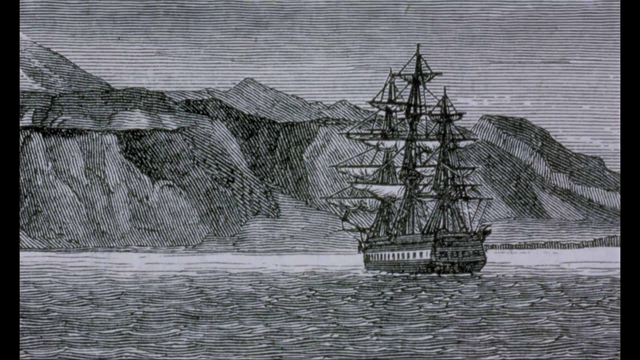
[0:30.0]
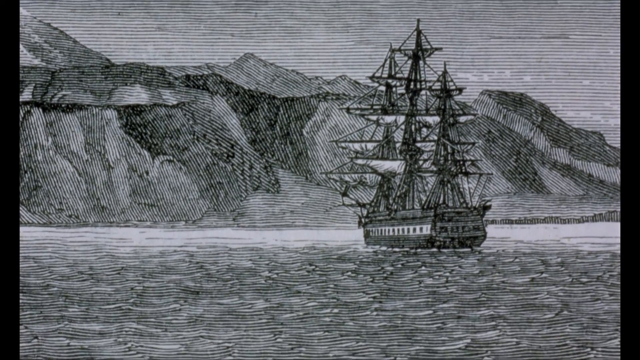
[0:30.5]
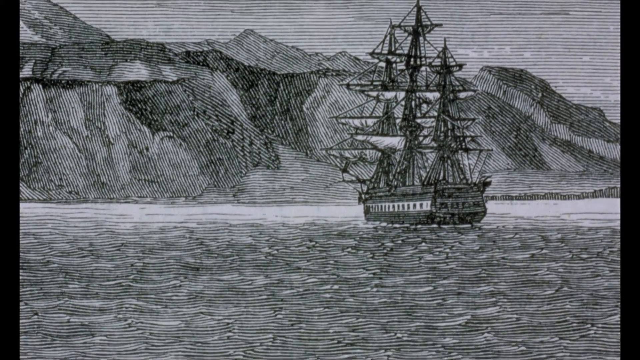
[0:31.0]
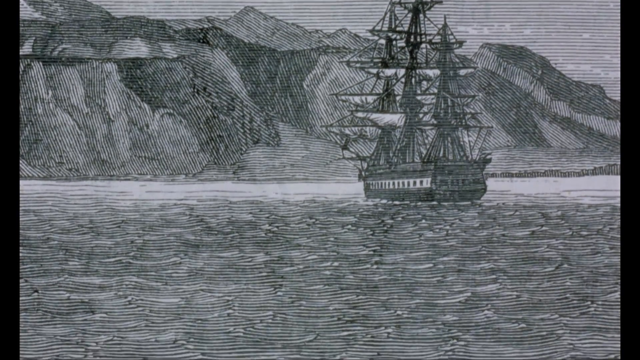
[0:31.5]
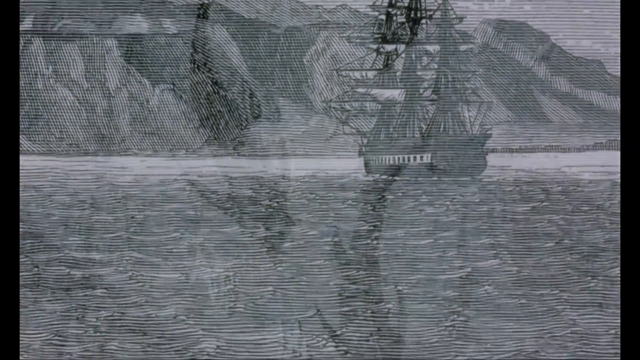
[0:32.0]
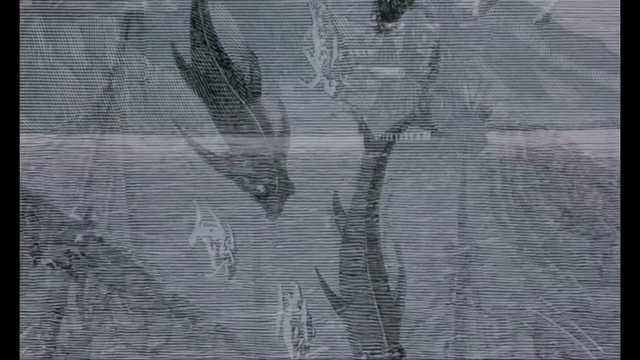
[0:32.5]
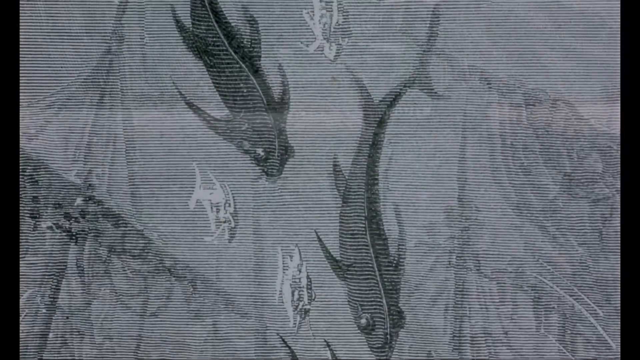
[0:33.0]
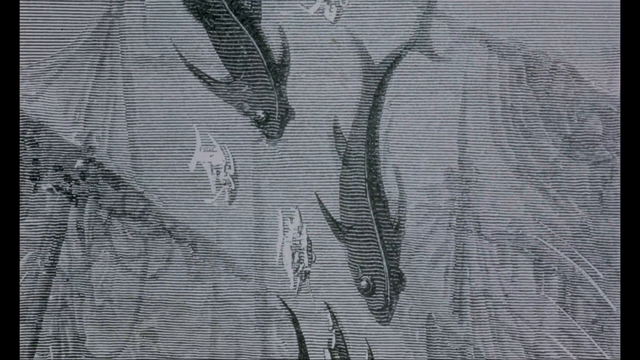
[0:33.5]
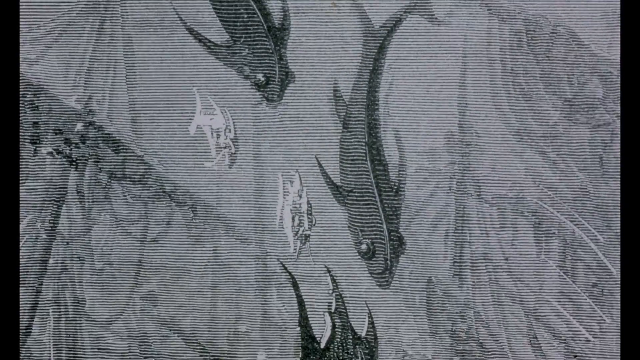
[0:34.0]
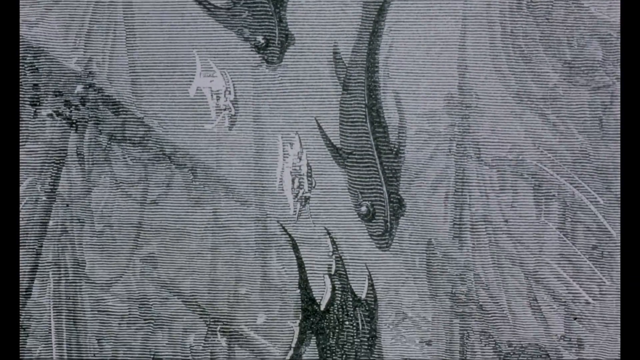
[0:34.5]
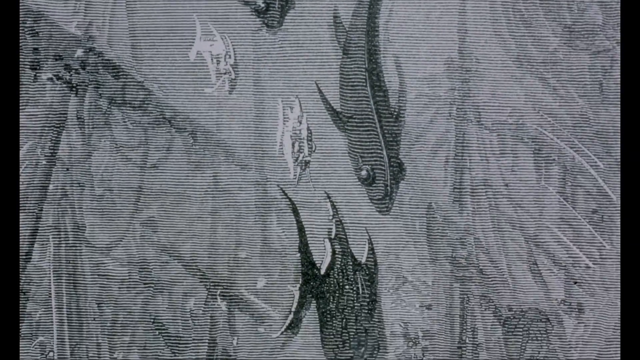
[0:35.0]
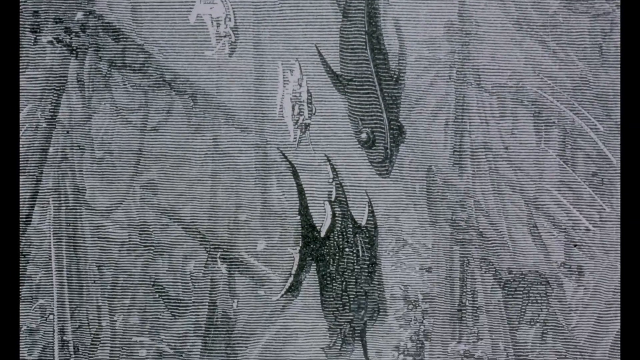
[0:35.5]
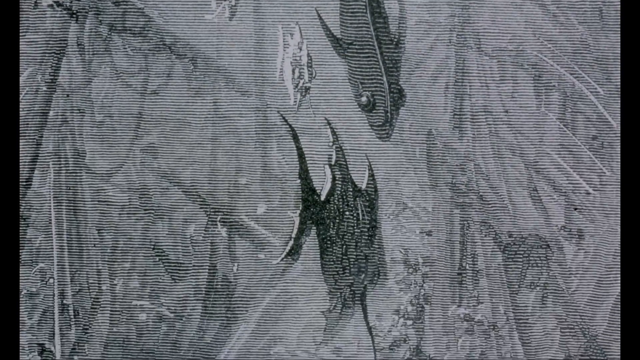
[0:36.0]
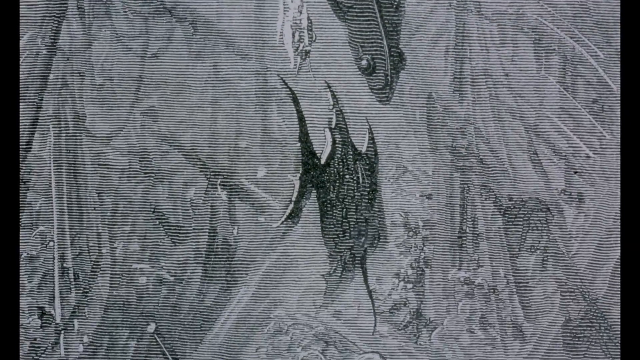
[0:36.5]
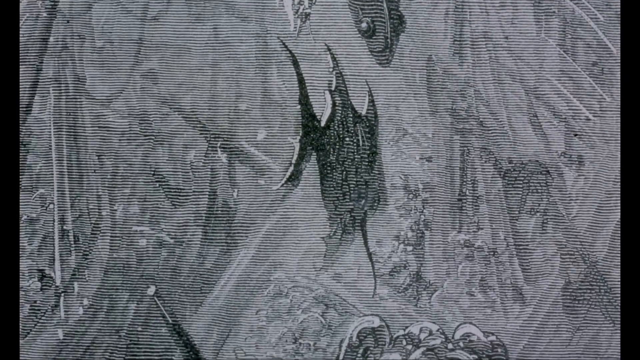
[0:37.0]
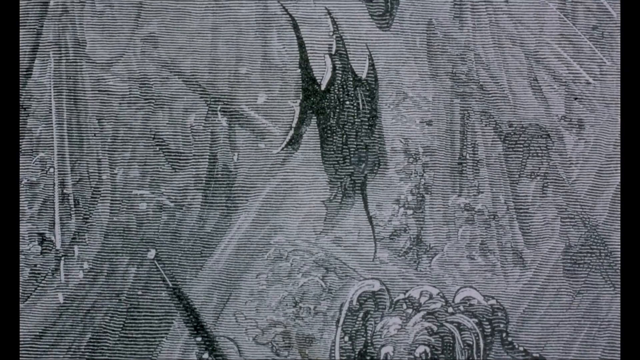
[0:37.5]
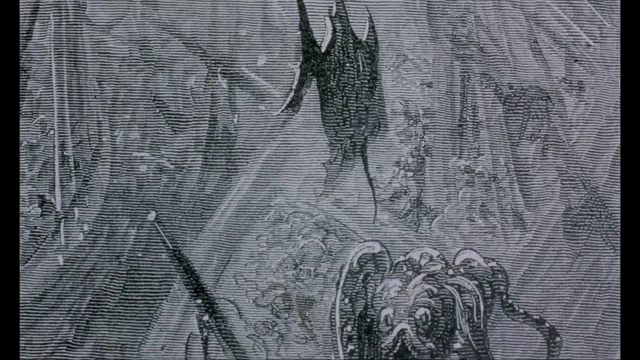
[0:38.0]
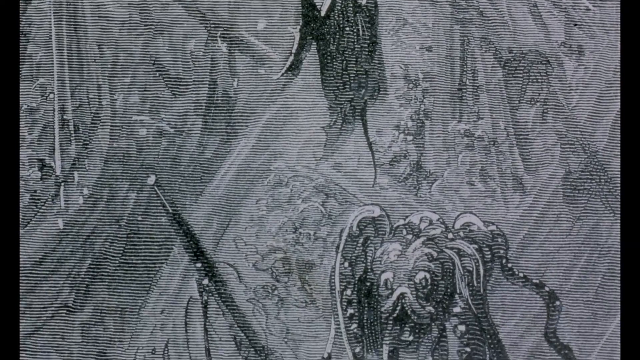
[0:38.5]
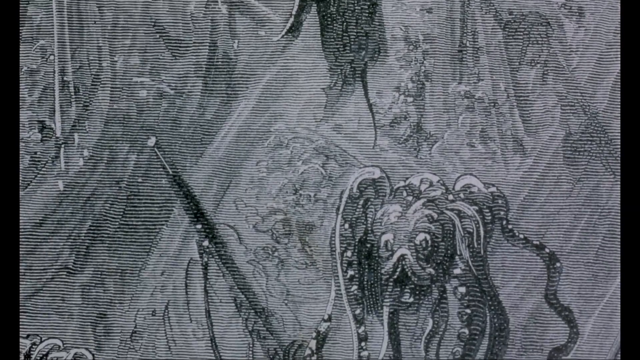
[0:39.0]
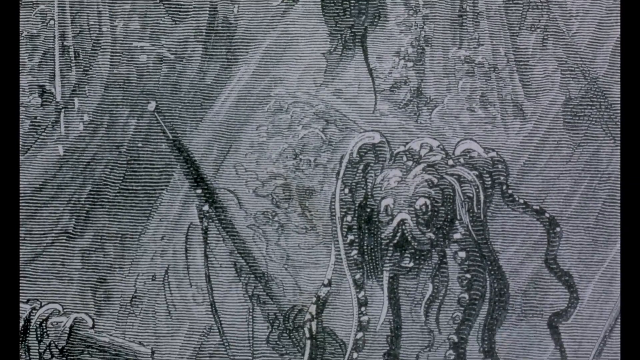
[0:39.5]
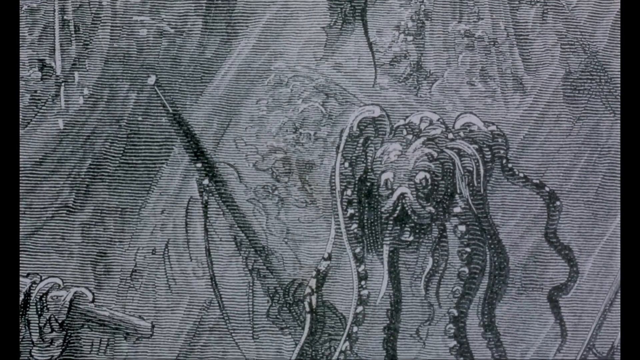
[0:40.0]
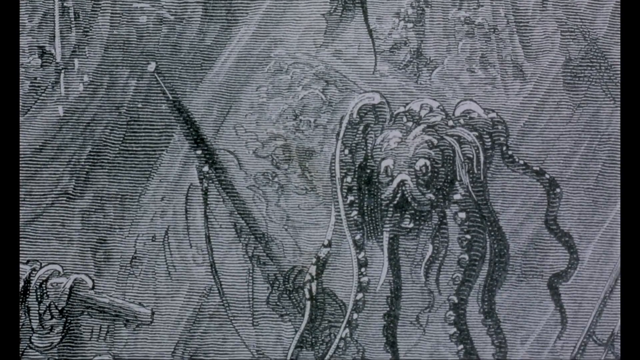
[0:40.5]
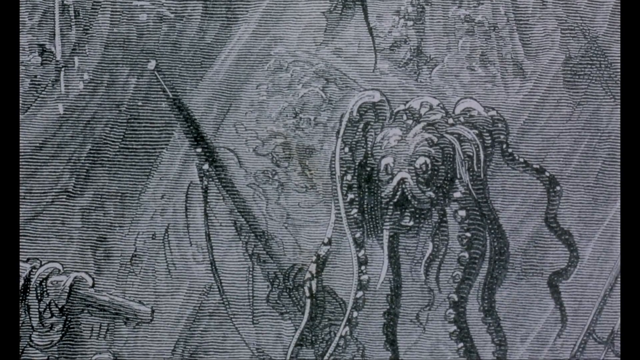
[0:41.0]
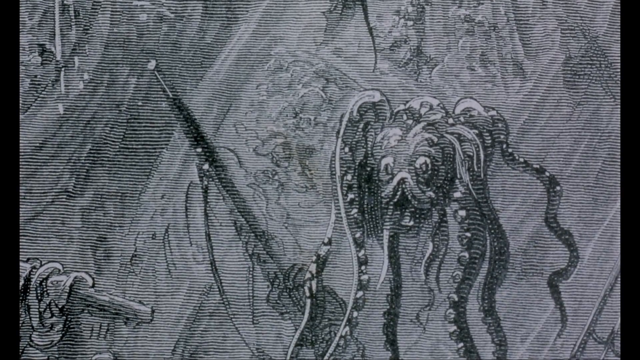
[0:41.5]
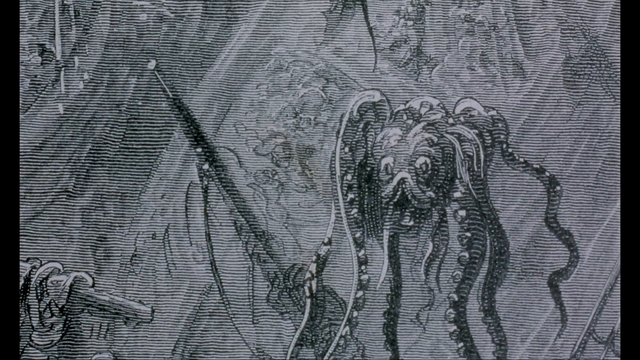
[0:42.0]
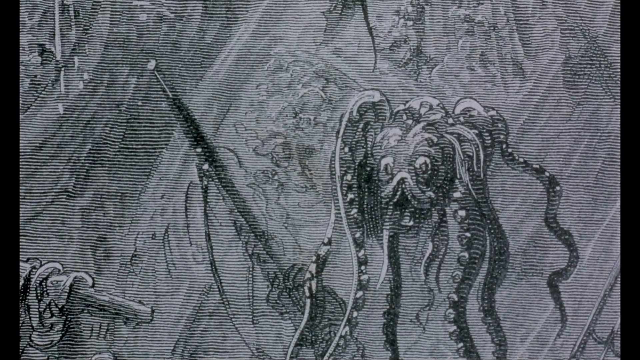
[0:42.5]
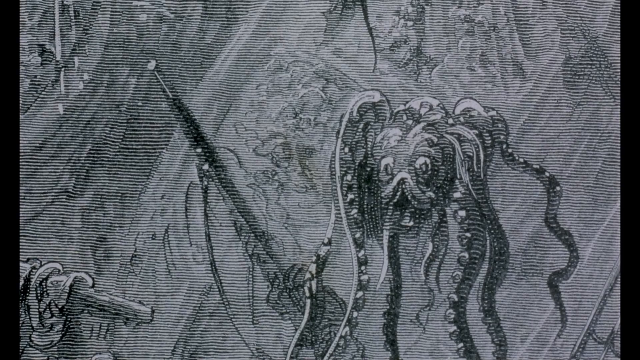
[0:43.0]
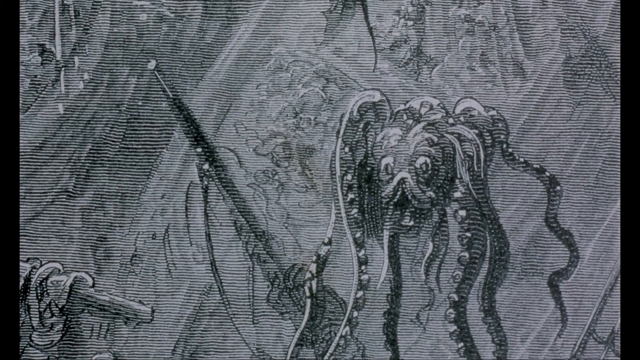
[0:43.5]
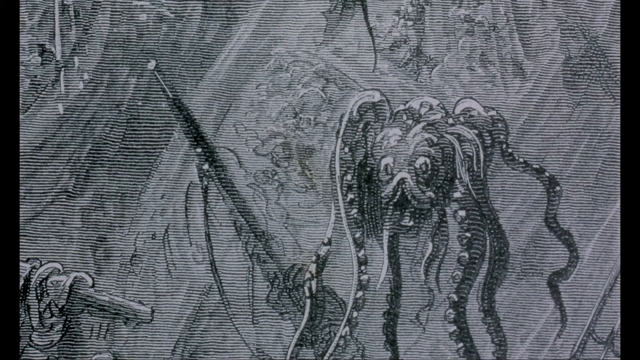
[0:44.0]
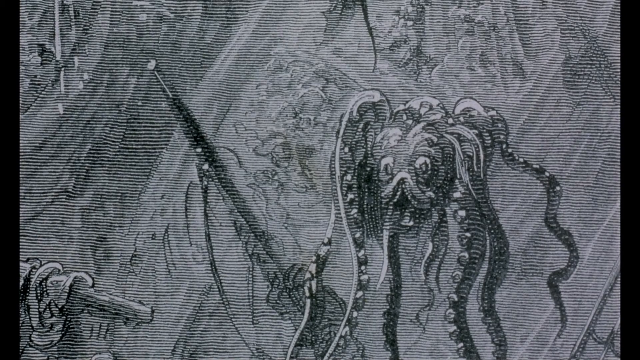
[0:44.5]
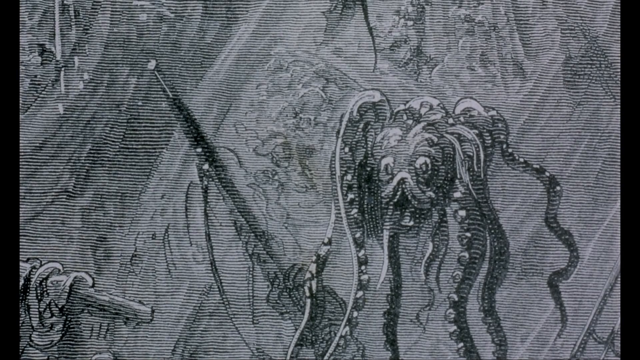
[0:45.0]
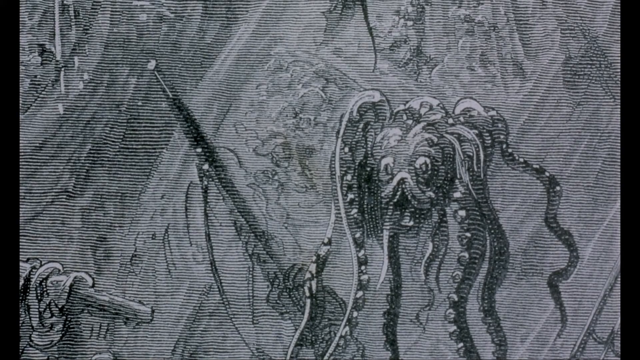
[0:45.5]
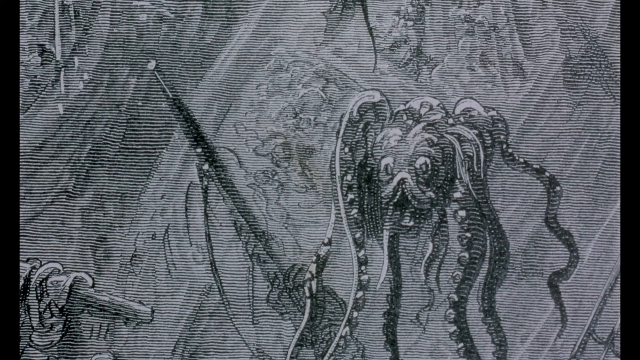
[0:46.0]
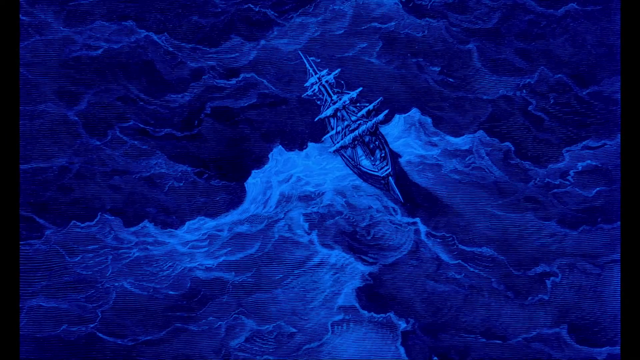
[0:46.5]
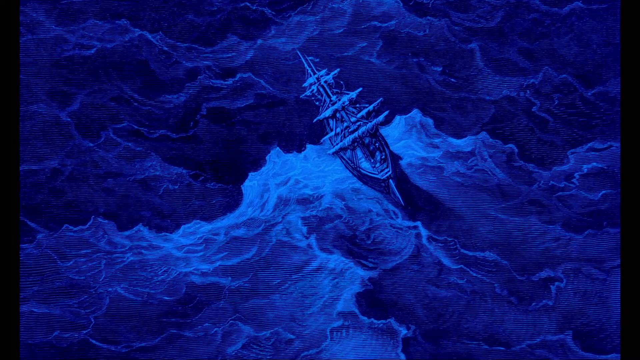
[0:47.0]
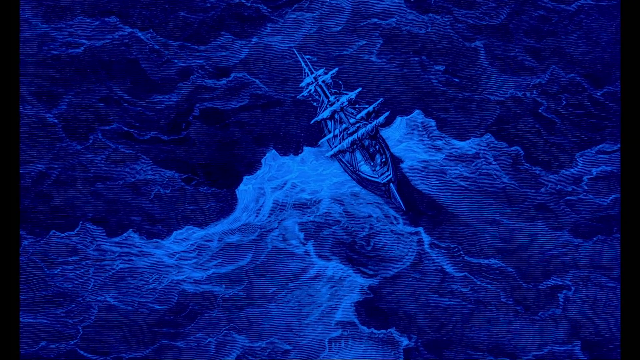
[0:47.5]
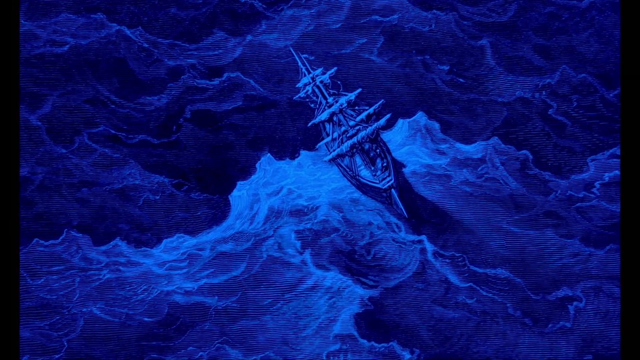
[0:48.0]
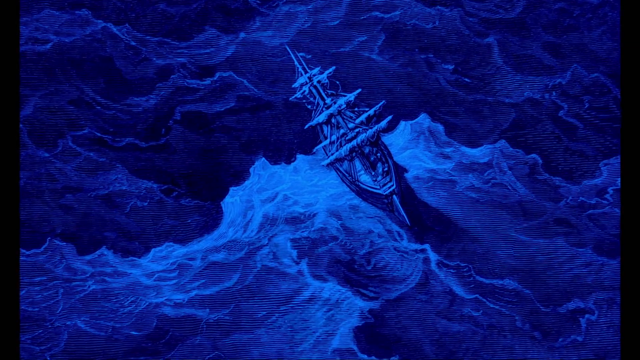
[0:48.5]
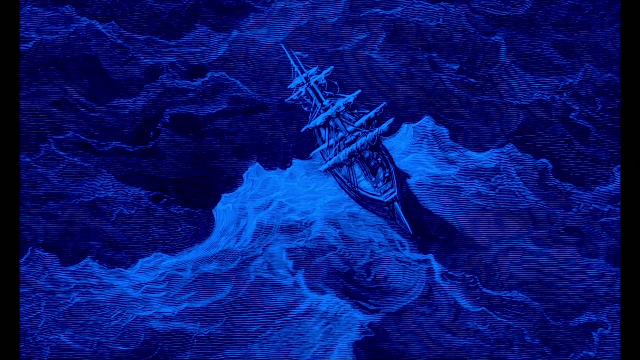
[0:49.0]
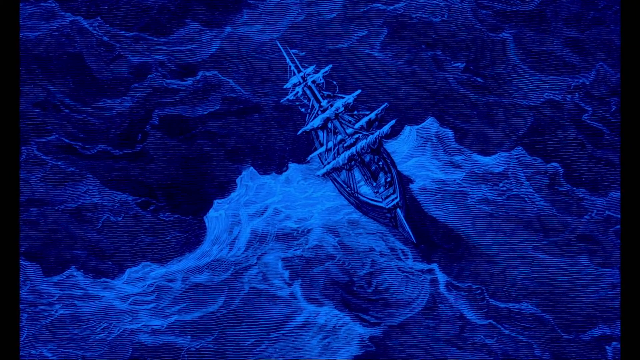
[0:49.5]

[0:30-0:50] The black and white drawing of the boat is still visible, with mountains behind it, and the camera is focused on the water below. The camera continues to pan down as a new scene fades in: another black and white drawing, this time of an underwater scene with sea life, specifically three large blackfish and two small fish, with the wreckage of past ships behind them. The camera continues panning down the drawing, and a squid-like creature appears in the bottom right-hand corner. The camera stays still on this creature before the scene transitions to a simplistic painting, all in light and dark shades of blue, of a large ship with many sails being thrown about on choppy waters. The ship is in the center of the painting, and the camera zooms in towards it.